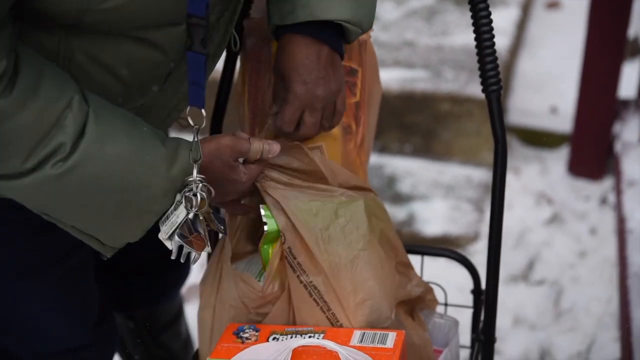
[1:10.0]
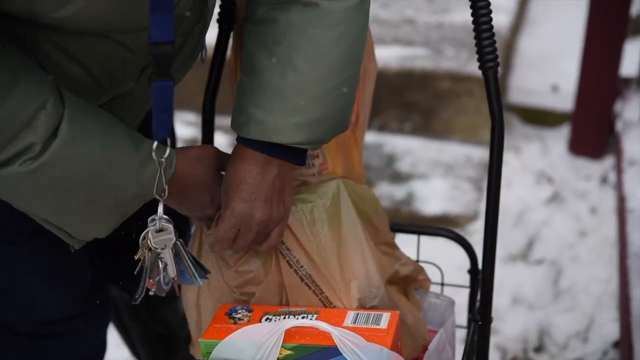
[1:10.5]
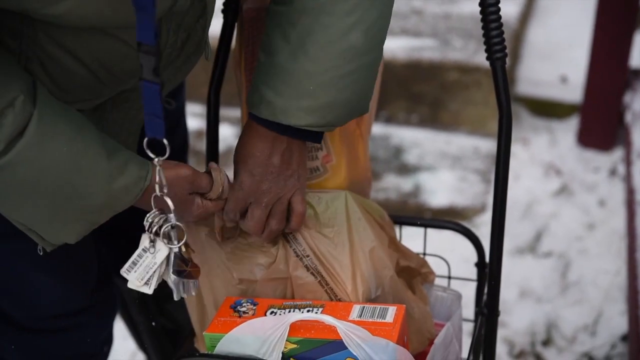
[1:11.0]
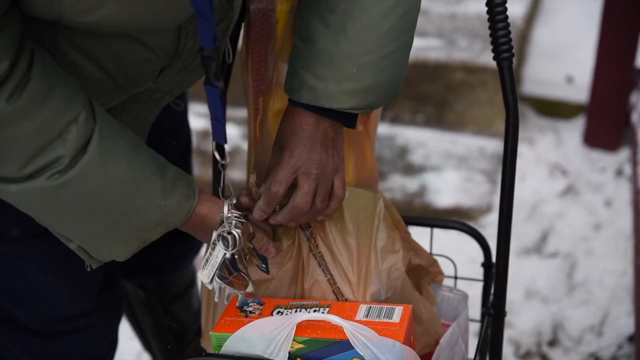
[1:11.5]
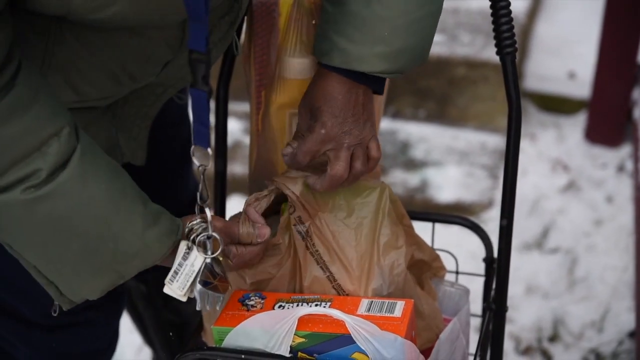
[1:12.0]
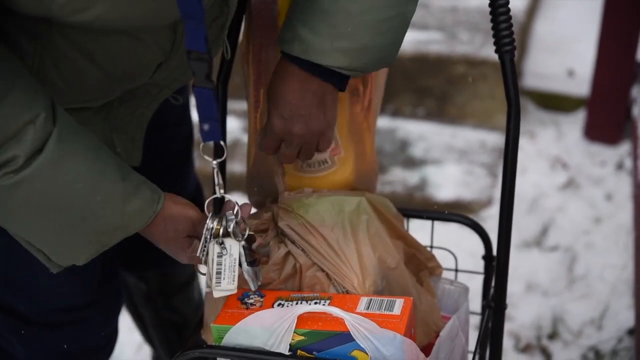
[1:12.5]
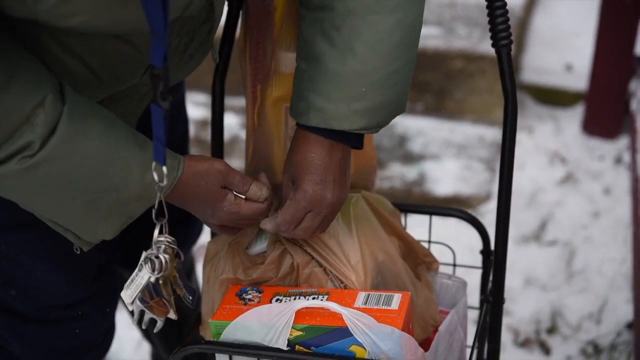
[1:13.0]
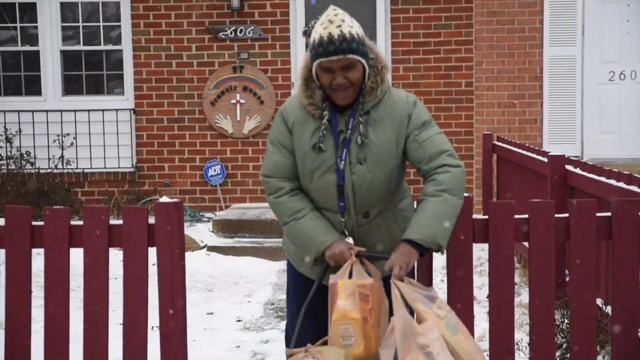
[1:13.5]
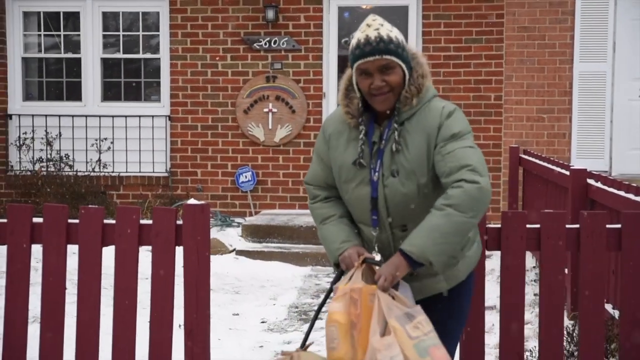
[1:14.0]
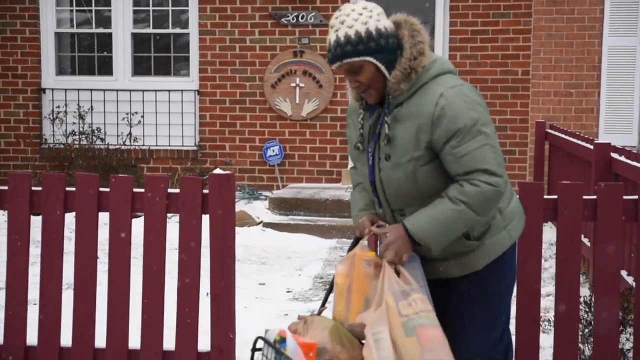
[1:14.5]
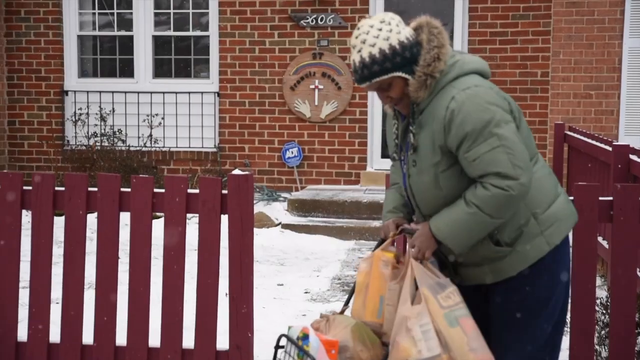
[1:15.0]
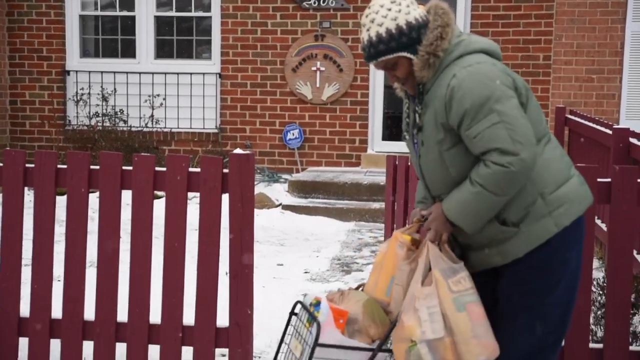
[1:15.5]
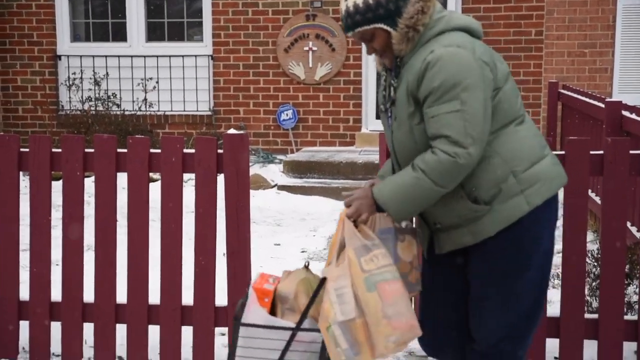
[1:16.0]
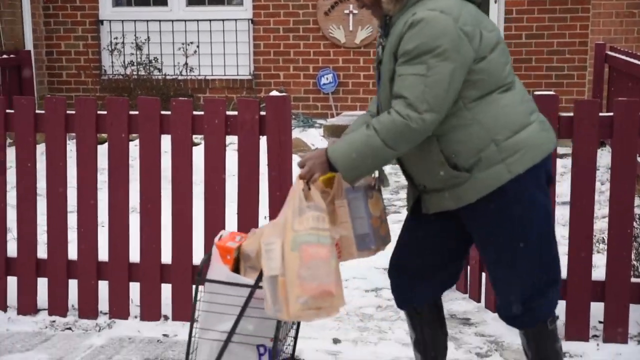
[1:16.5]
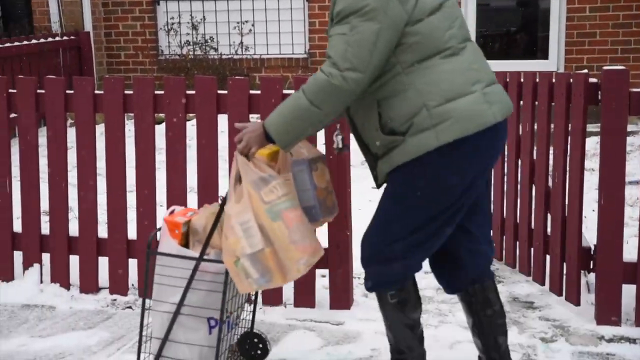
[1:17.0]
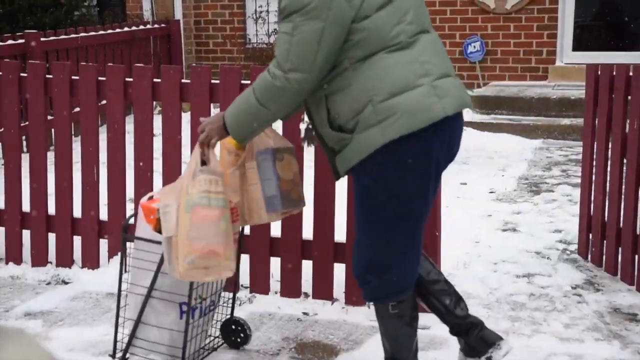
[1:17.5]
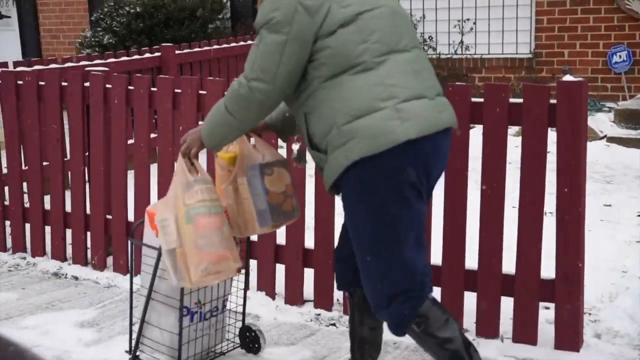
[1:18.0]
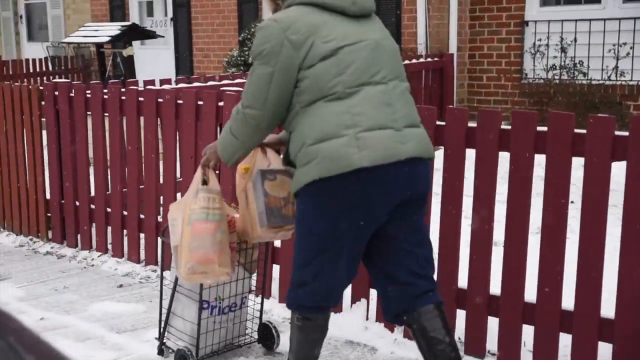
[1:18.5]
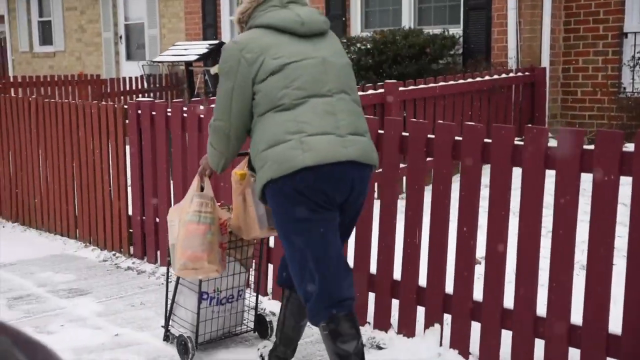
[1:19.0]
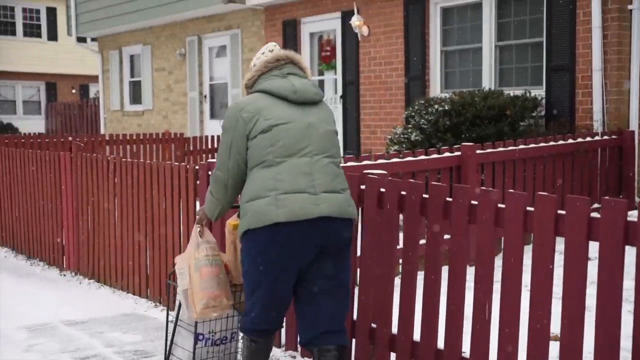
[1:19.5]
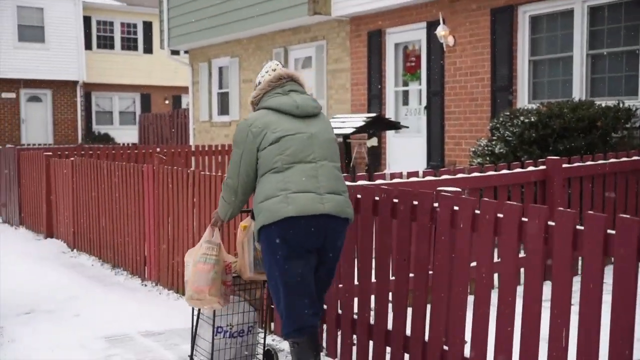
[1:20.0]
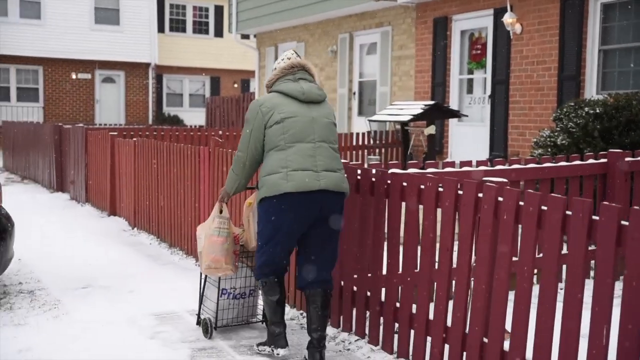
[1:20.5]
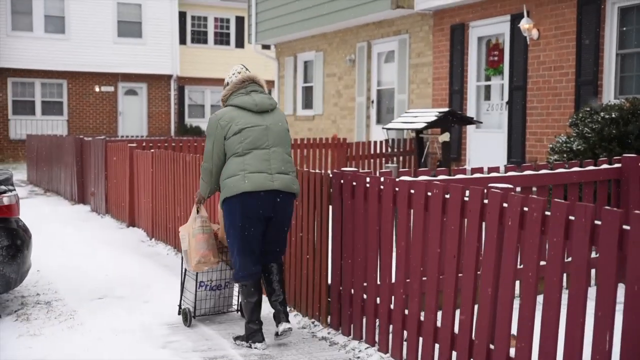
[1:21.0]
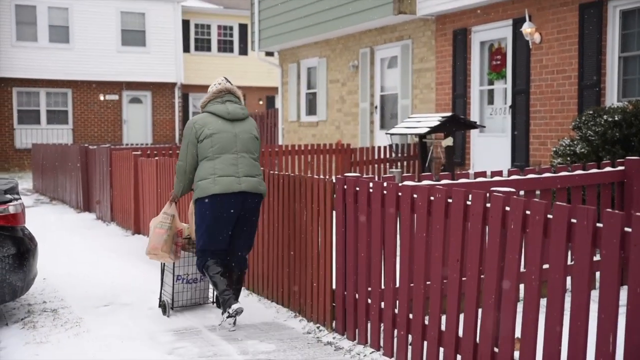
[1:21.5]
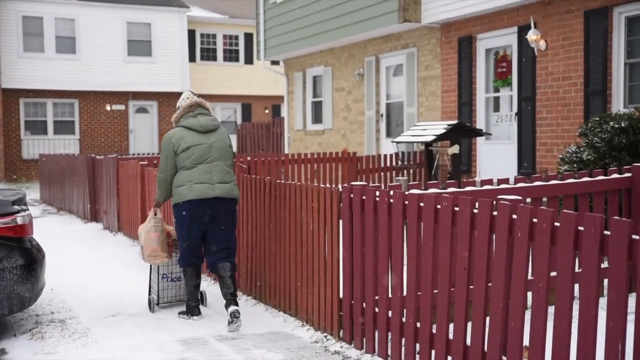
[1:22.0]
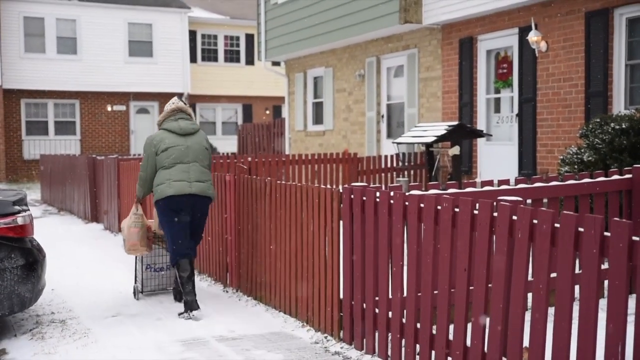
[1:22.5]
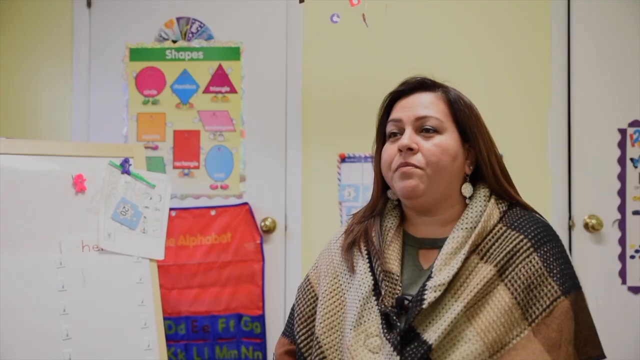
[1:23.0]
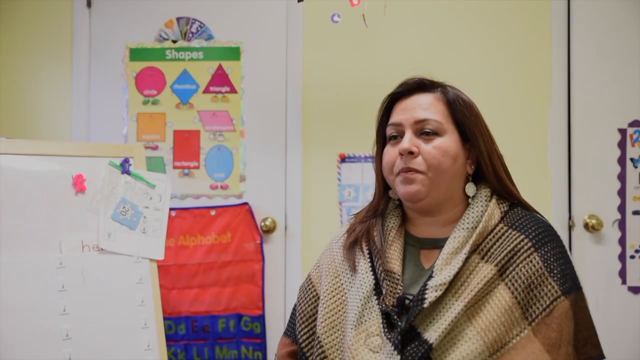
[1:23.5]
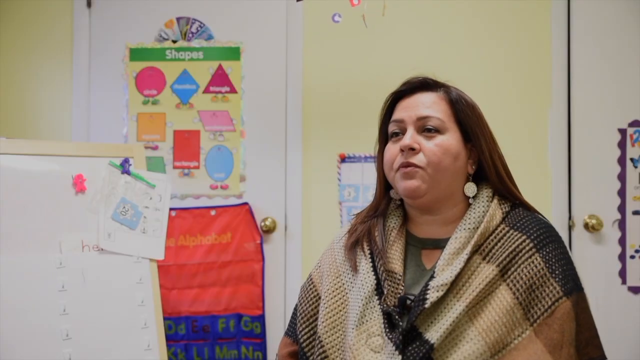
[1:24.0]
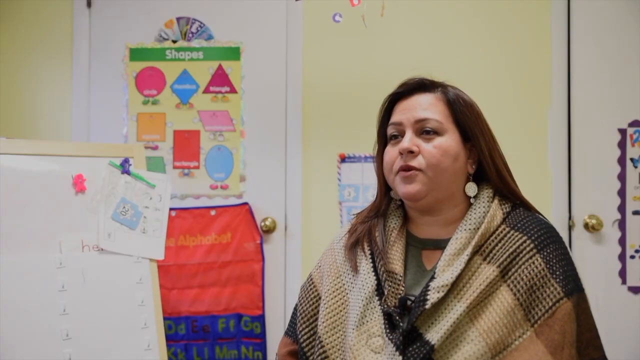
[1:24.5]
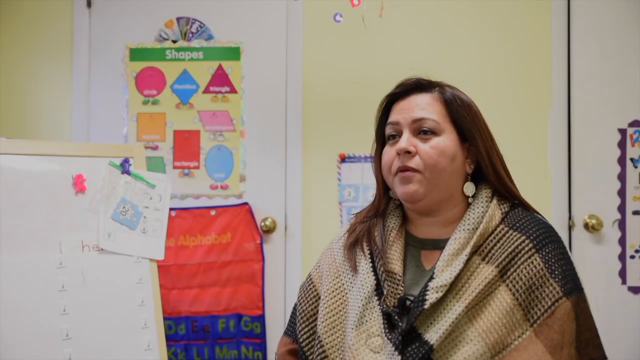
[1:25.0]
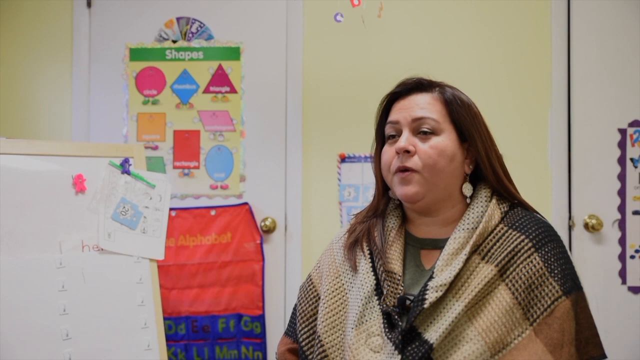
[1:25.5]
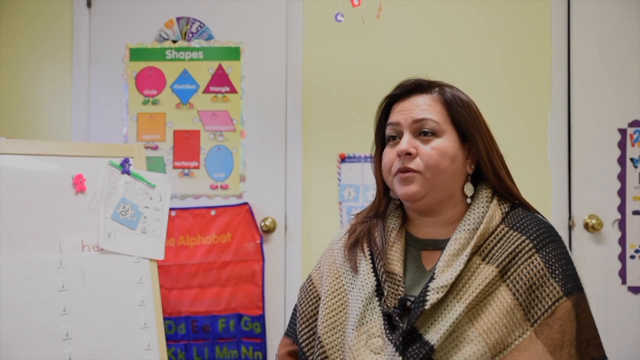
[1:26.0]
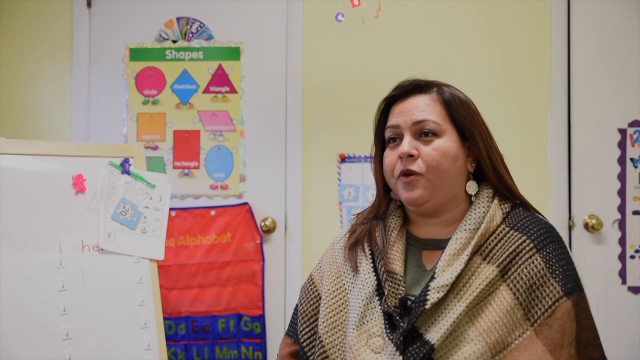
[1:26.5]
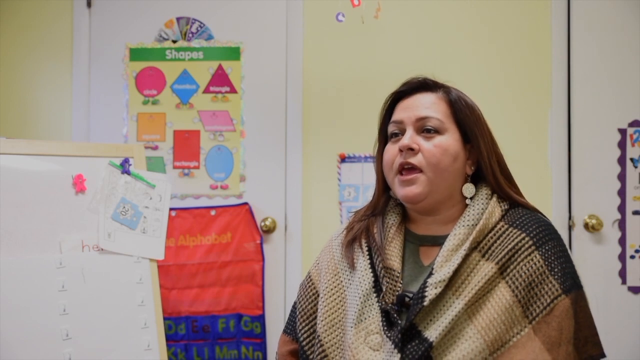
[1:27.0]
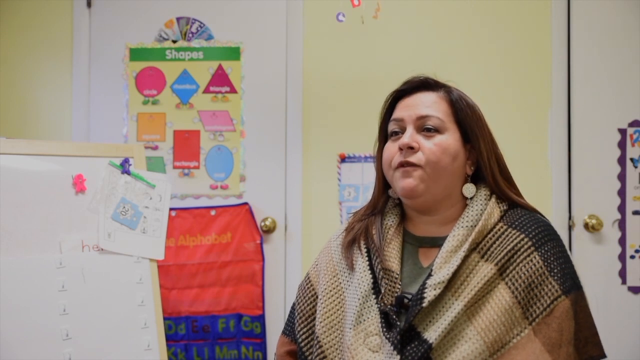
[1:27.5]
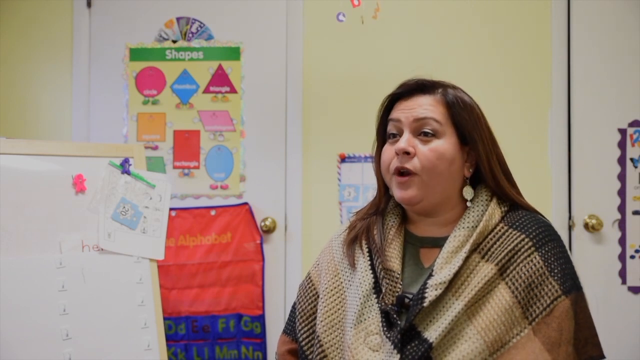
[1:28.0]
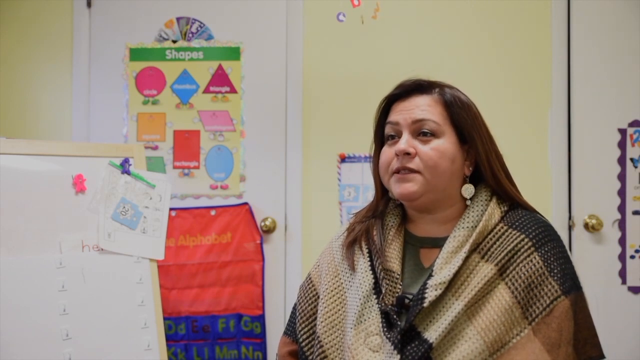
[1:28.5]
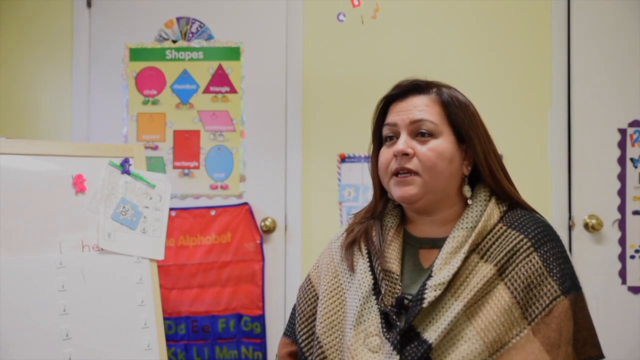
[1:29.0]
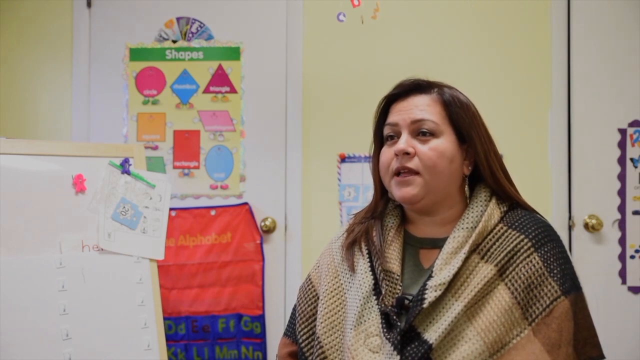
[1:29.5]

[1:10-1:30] Doris leaves the shopping house with the things she has bought packed up. She wears a green coat sweater and black trousers and pushes a trolley carrying lots of goods along the snowy path. A fair woman with long hair then speaks to the camera. Behind her is a grey wall with a sign written in green, "shop", and multiple colours and shapes, including a triangle, a square and a circle. Her name is not displayed. She wears an earring, has long hair, and is sitting.